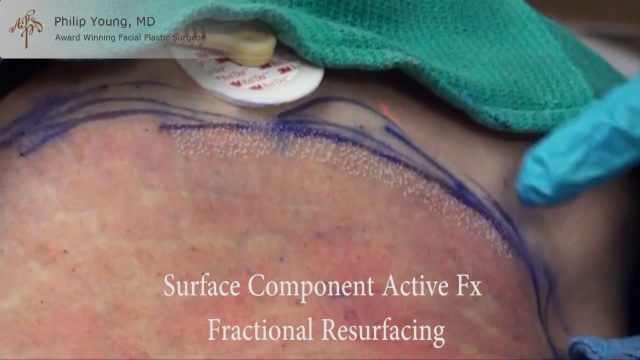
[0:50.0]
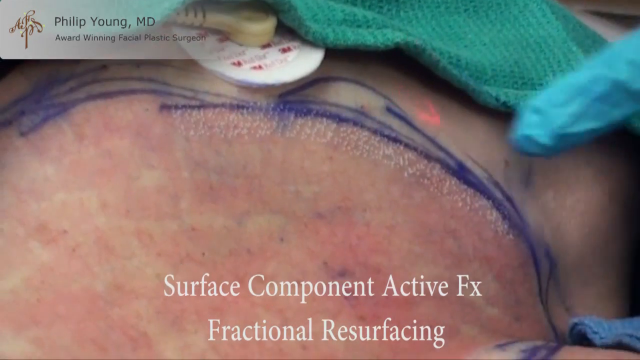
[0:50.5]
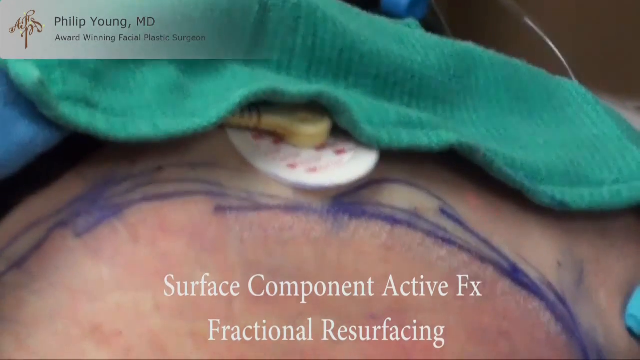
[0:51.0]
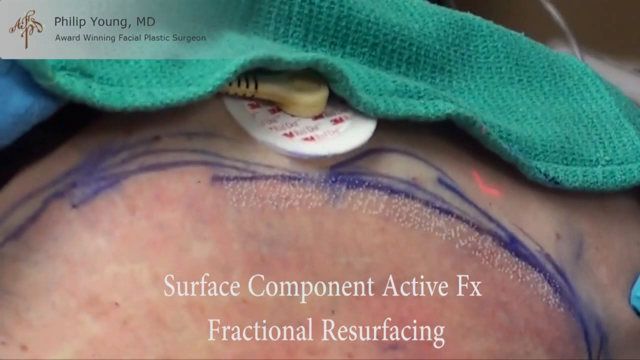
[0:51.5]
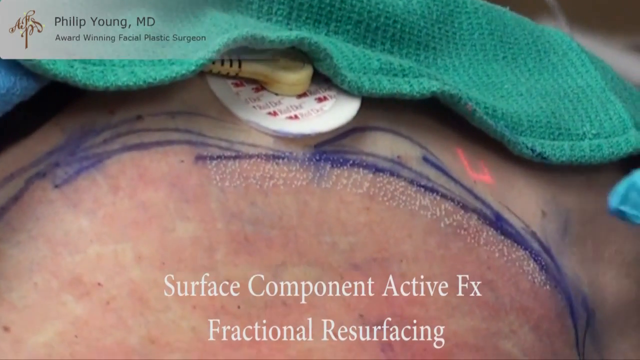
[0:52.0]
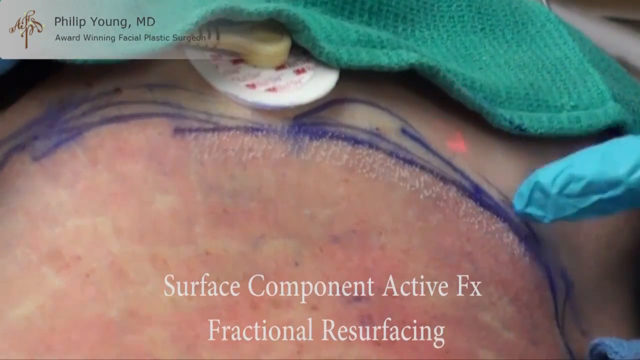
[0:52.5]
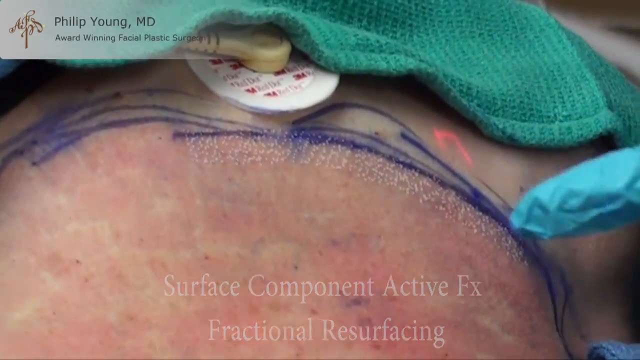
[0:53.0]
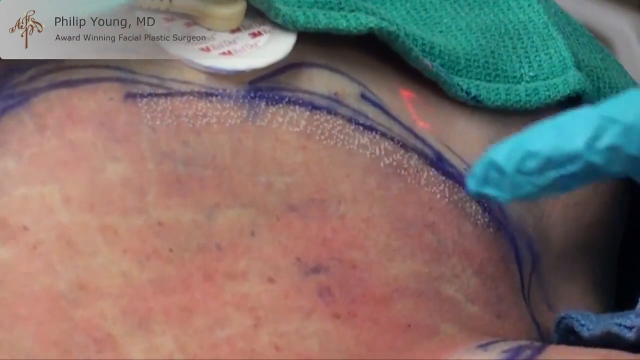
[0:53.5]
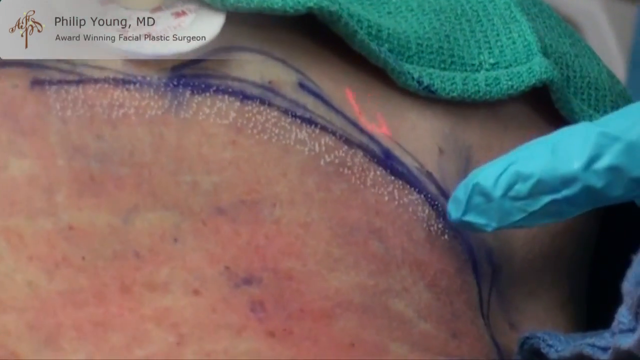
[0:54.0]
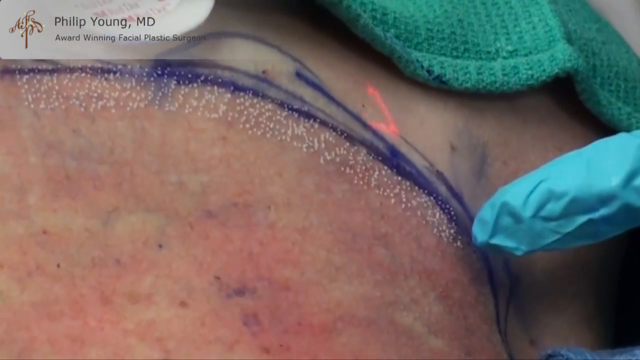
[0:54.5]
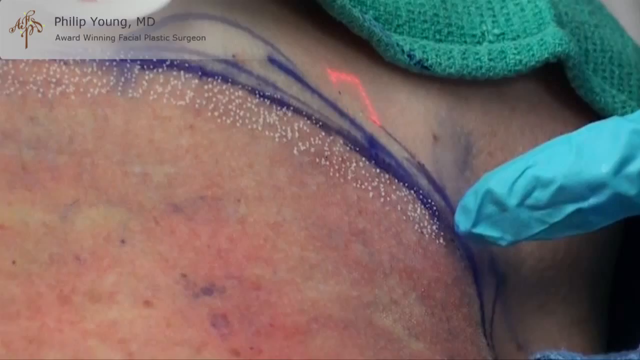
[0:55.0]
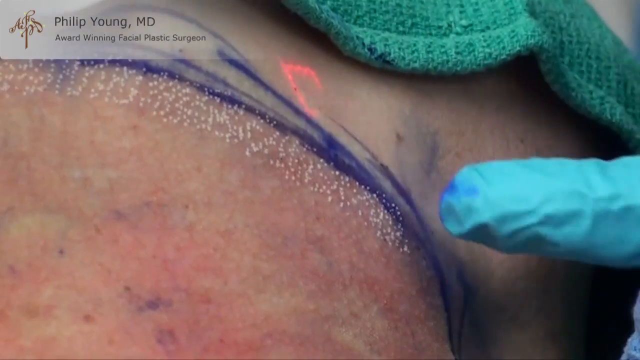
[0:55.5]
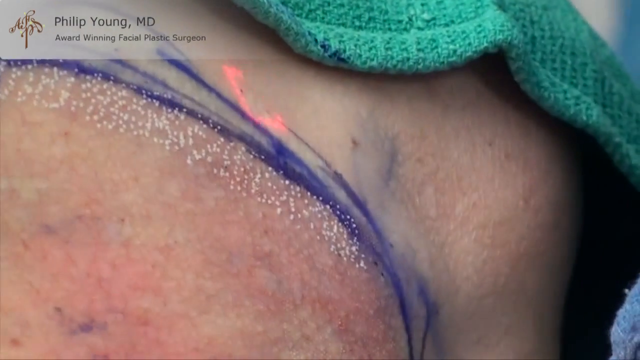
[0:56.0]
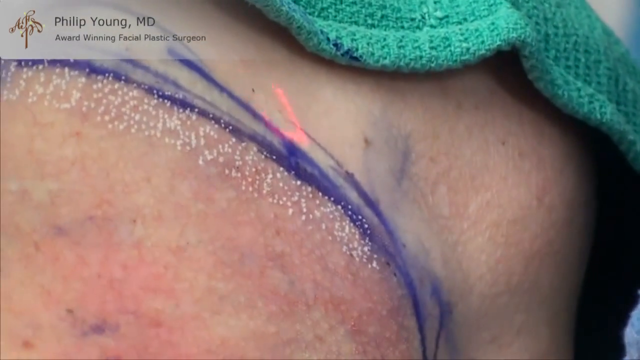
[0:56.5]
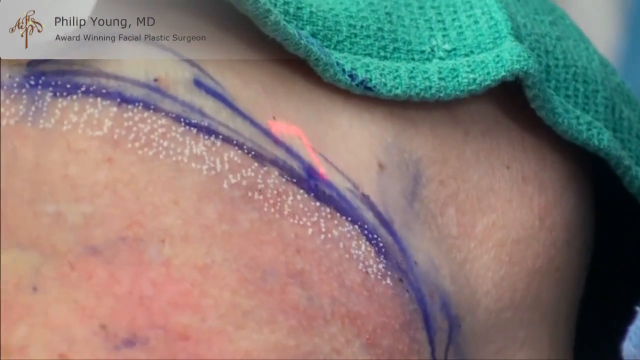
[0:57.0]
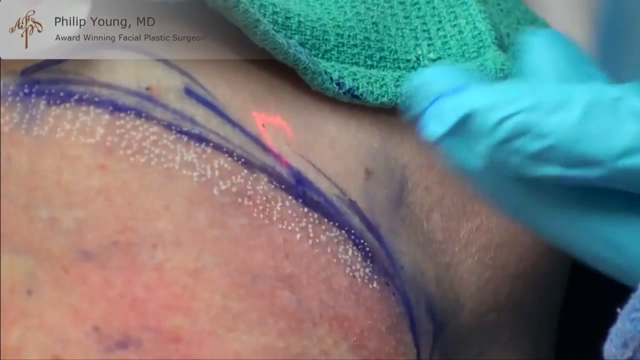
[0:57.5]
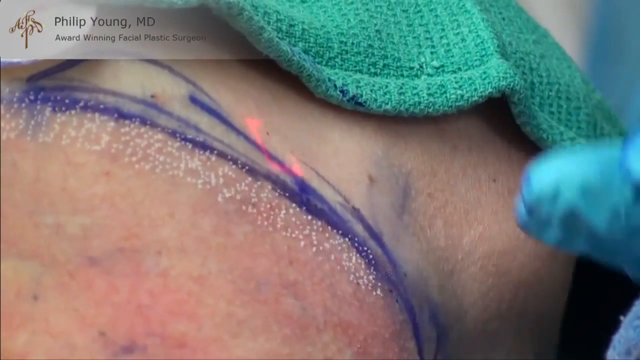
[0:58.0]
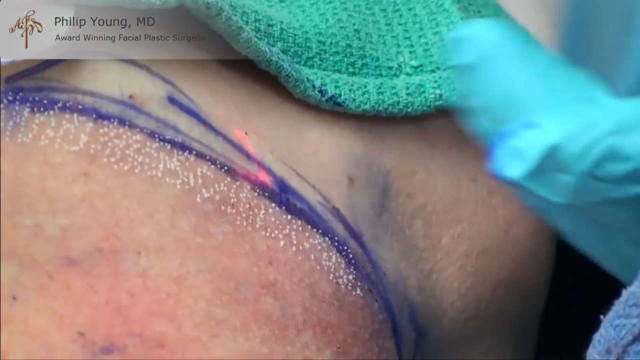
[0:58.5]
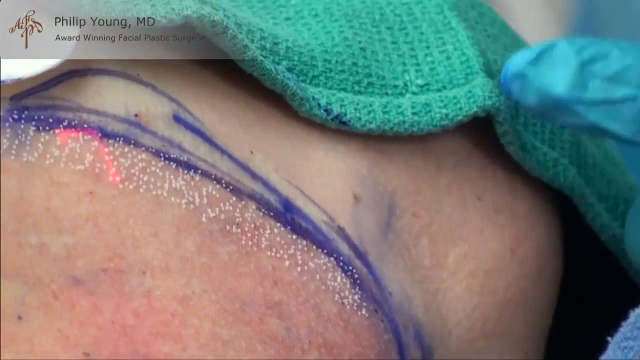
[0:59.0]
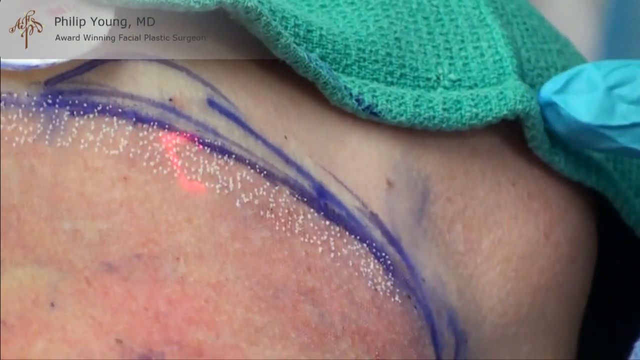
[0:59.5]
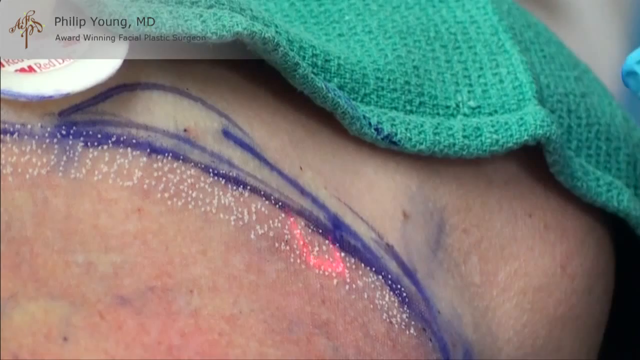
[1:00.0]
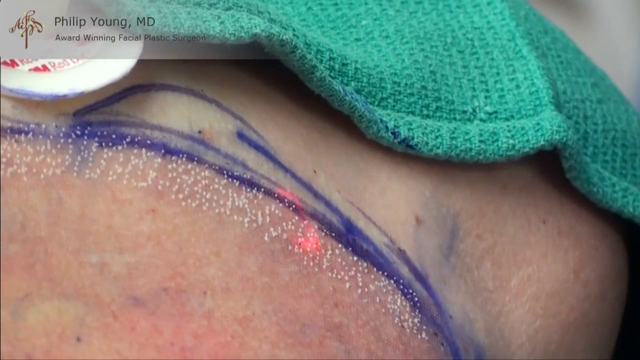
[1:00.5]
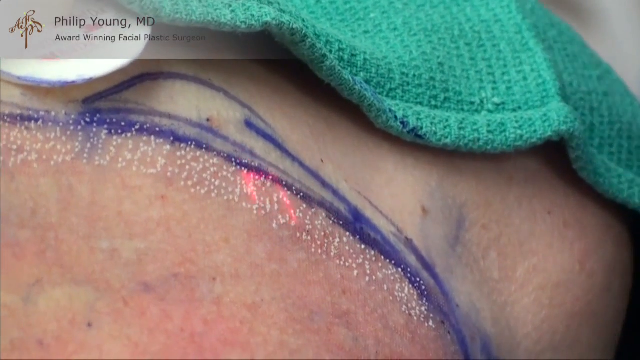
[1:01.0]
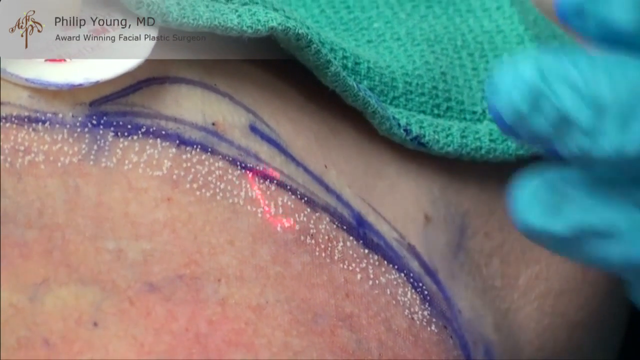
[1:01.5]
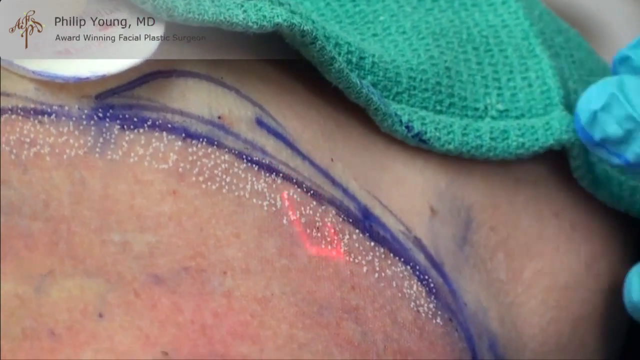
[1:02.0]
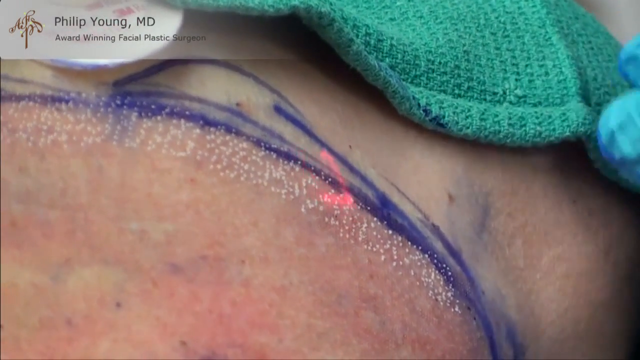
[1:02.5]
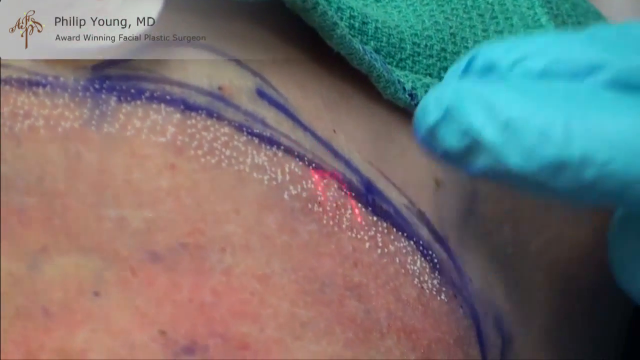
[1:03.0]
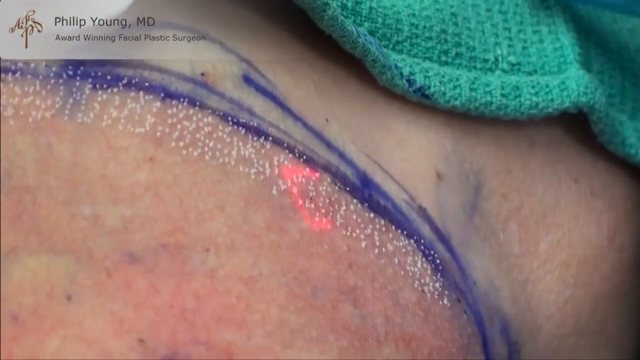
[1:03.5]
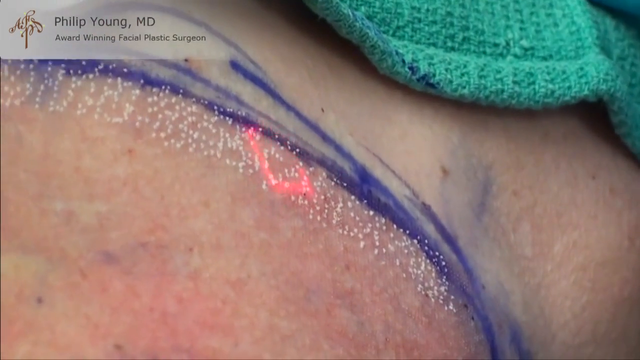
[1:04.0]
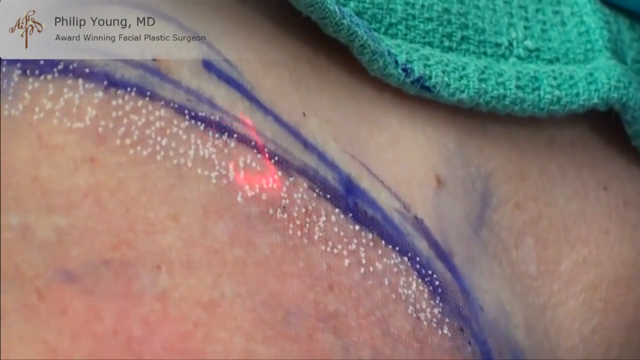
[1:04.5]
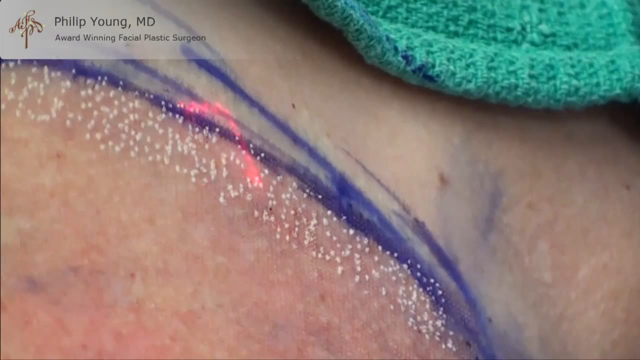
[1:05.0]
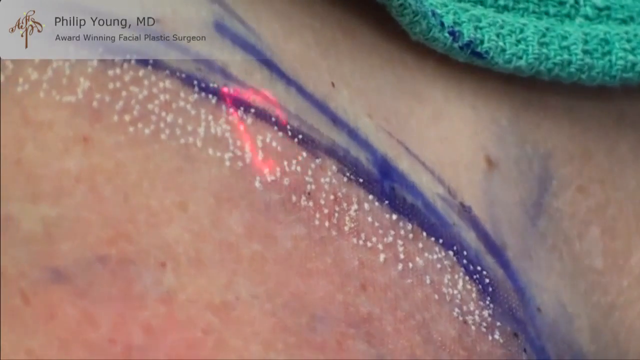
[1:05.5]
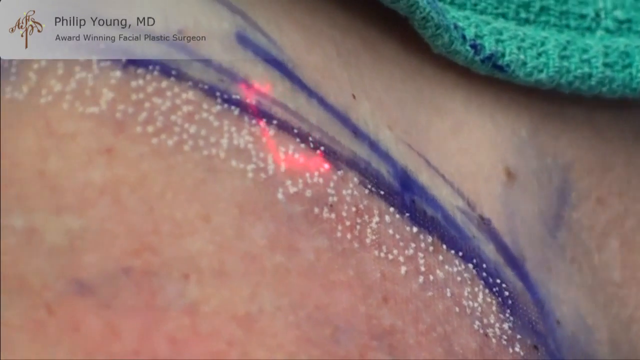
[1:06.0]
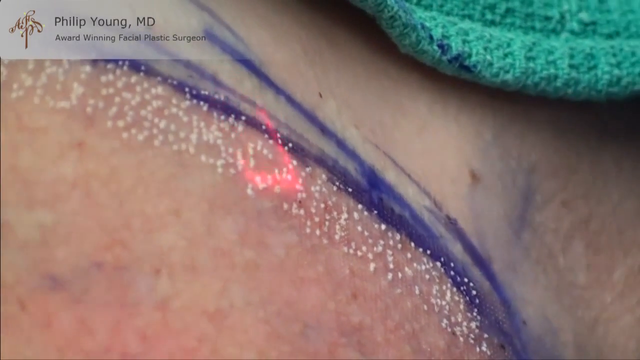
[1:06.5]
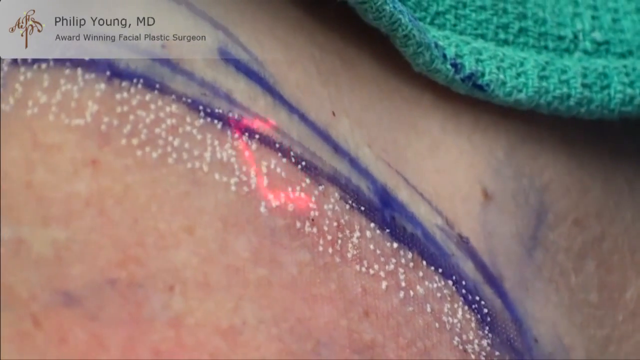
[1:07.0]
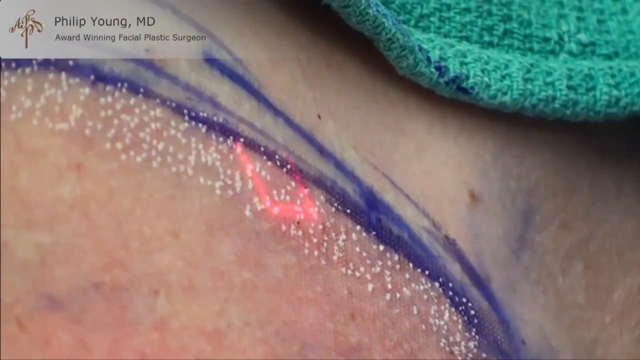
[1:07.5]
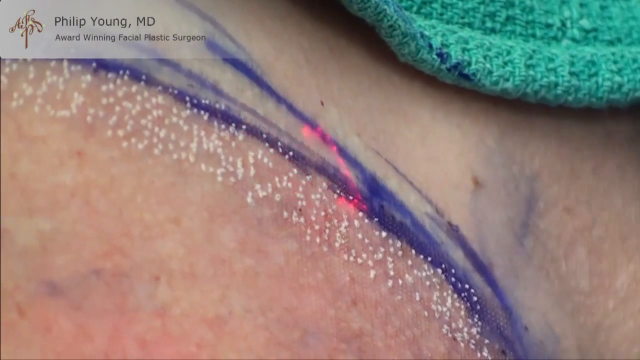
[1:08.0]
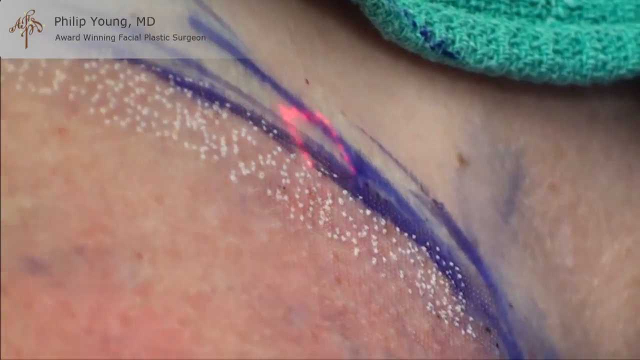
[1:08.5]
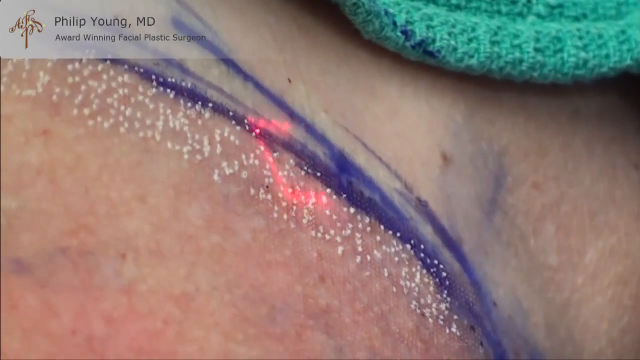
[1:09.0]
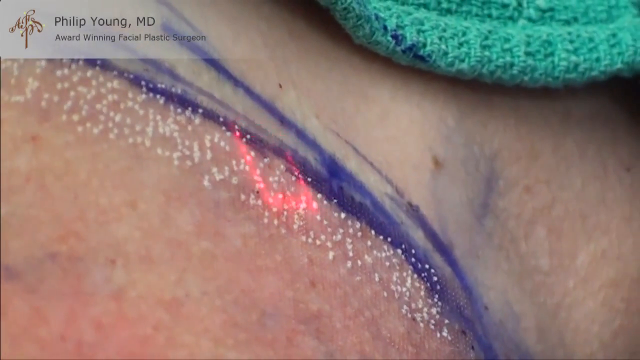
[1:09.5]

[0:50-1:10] White text at the bottom reads "Surface Component Active FX". A woman is laying down with a lot of blue ink on her skin, and a green towel is visible. There is pointing toward the little white dots that have been put onto her skin. A white banner in the top left corner of the screen reads "Philip Young, MD, award-winning facial plastic surgeon". He sort of points to the dots, and a little red light kind of moves around in a circle on her skin. He continues to point to the little white dots as the camera pans in closer, and the little red circle continues to kind of move around the area, going over the white dots. The camera zooms all the way in to the white dots and the blue ink on the woman's skin.